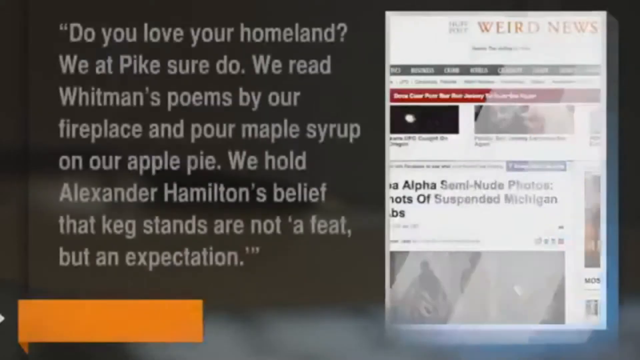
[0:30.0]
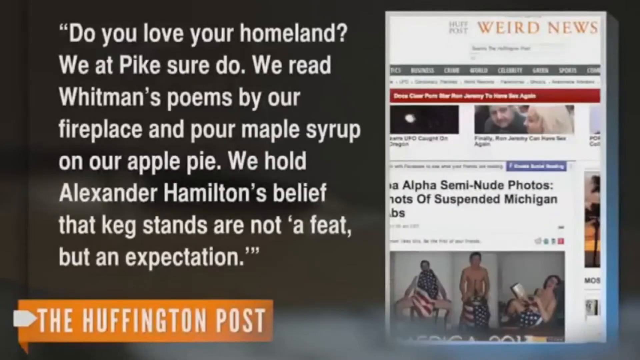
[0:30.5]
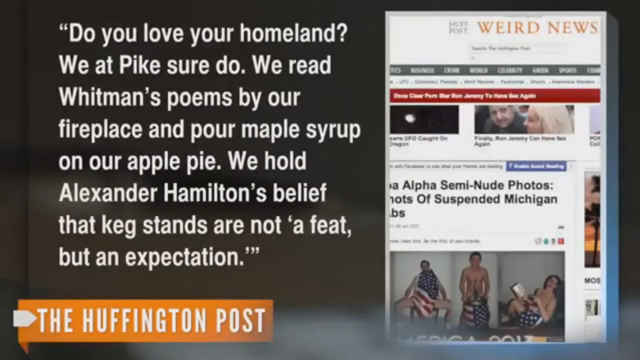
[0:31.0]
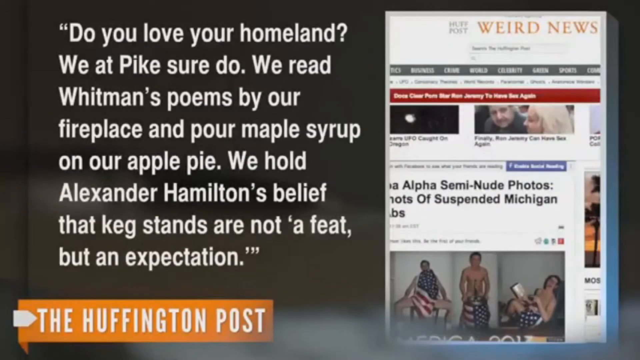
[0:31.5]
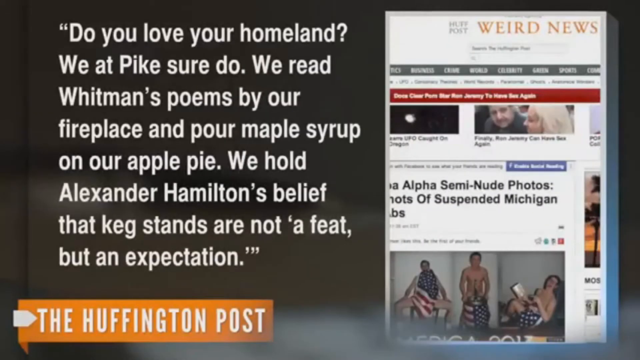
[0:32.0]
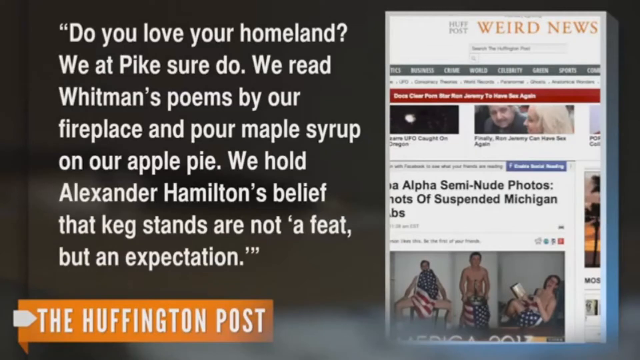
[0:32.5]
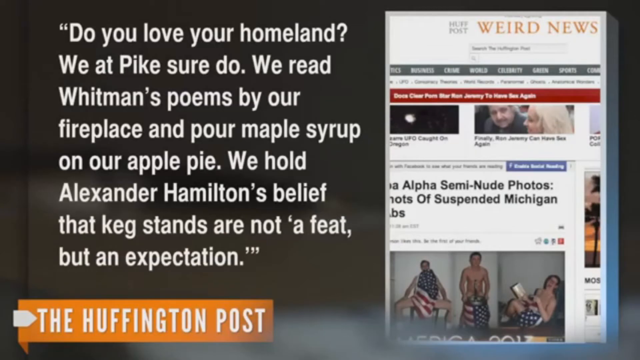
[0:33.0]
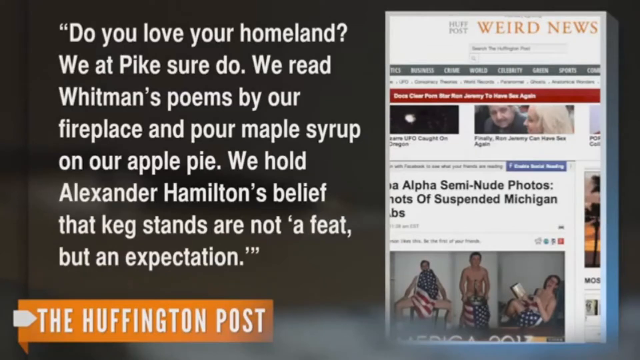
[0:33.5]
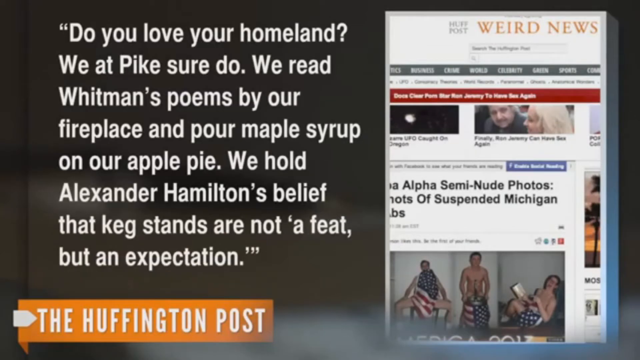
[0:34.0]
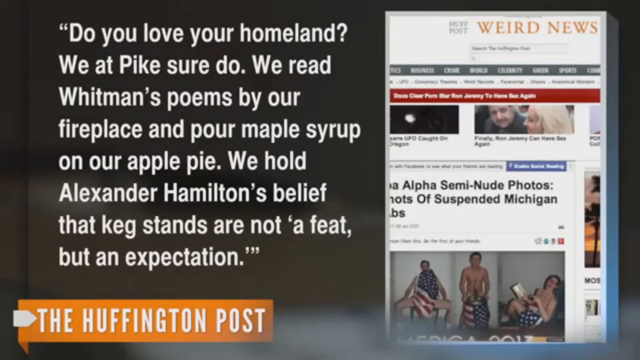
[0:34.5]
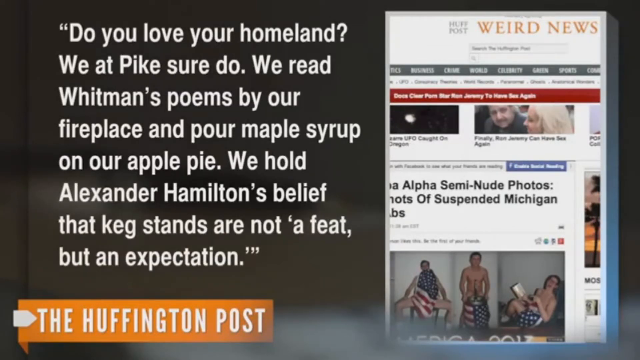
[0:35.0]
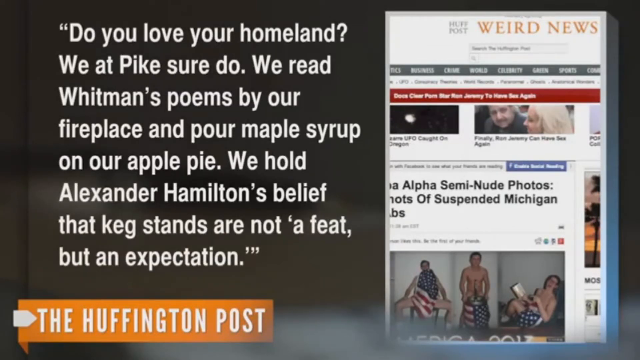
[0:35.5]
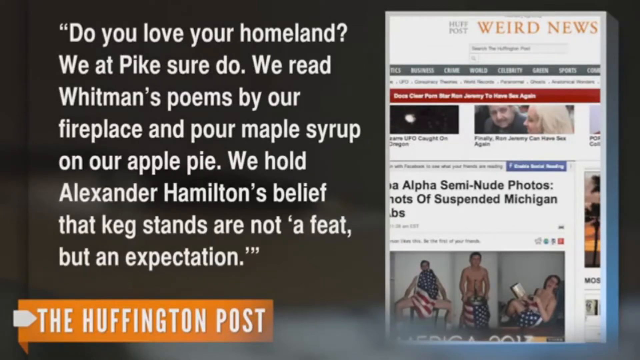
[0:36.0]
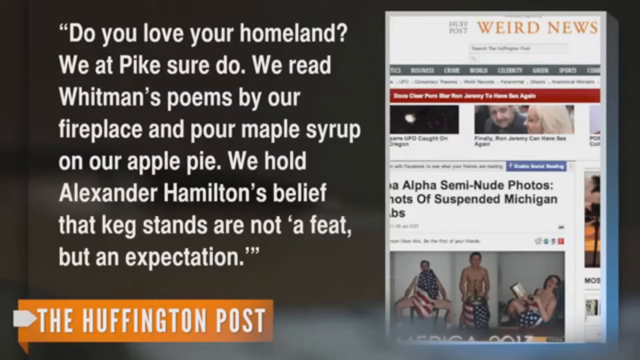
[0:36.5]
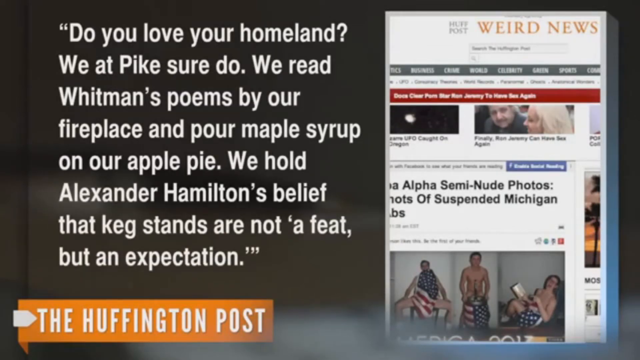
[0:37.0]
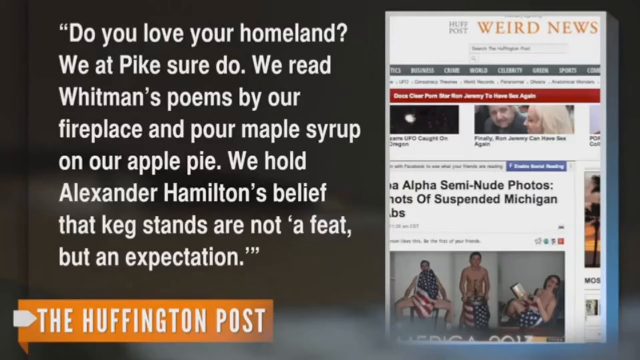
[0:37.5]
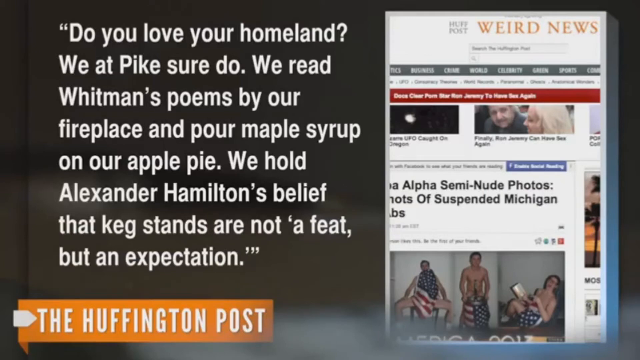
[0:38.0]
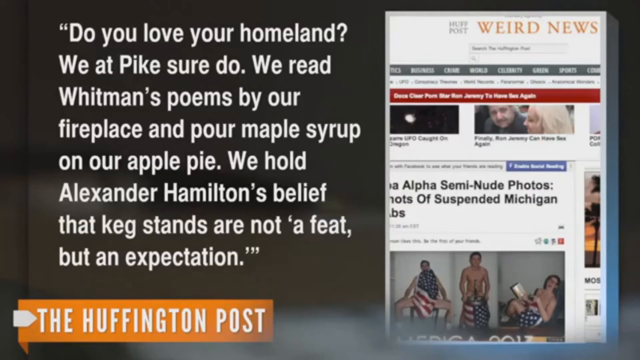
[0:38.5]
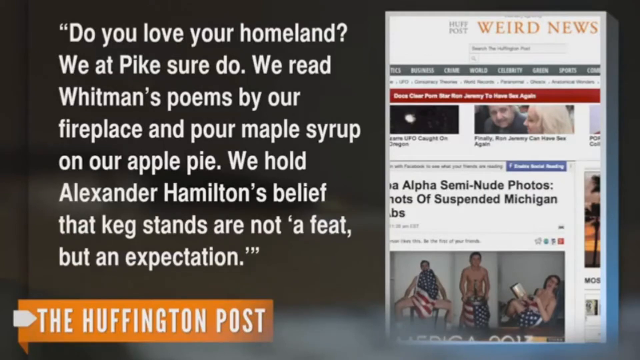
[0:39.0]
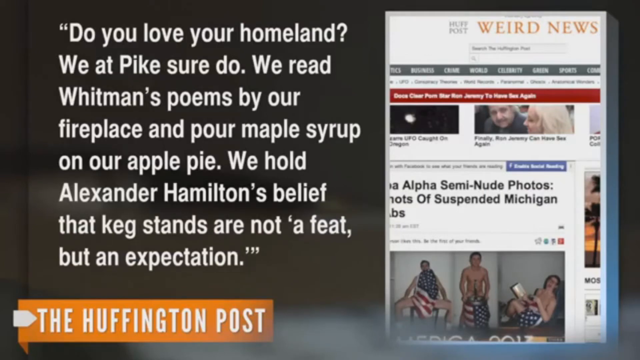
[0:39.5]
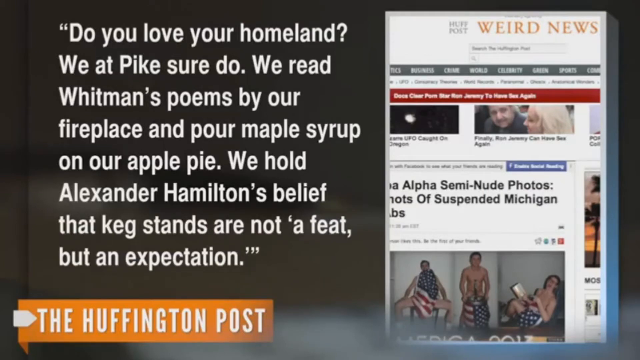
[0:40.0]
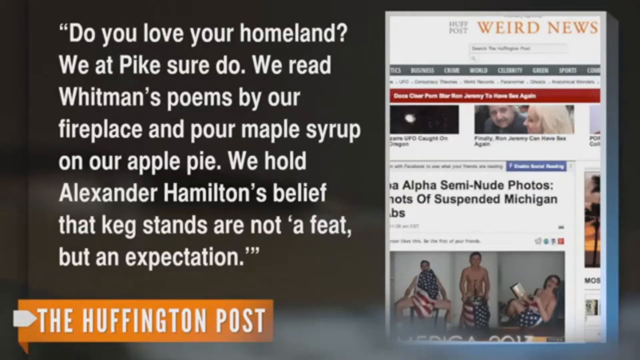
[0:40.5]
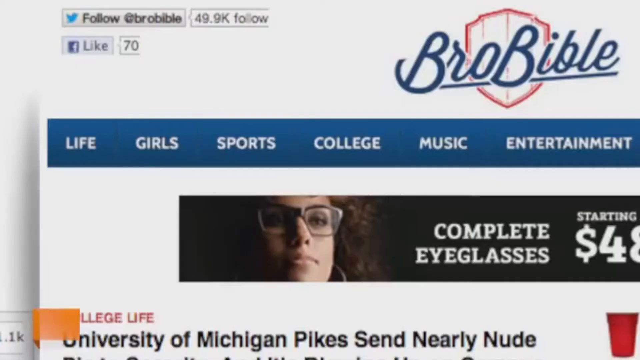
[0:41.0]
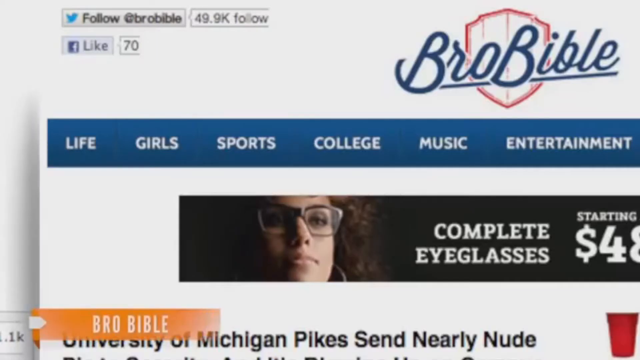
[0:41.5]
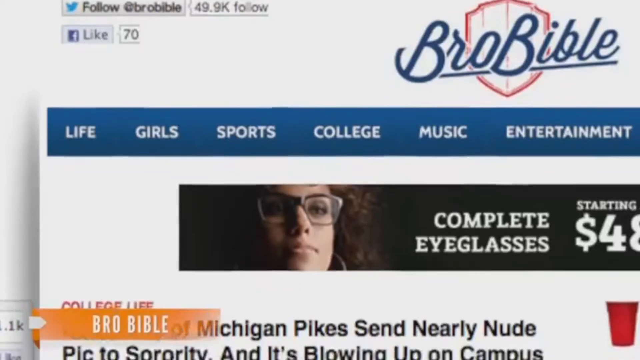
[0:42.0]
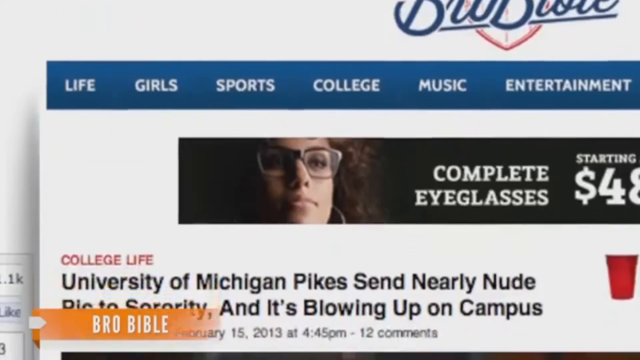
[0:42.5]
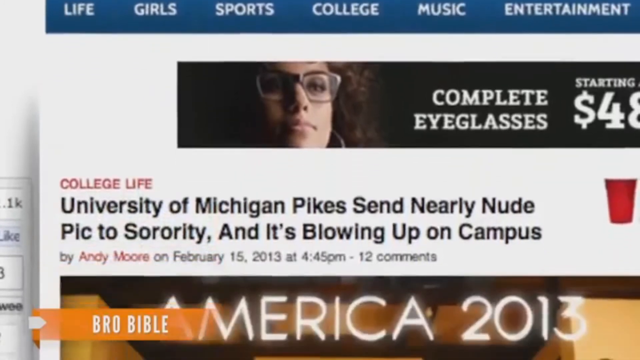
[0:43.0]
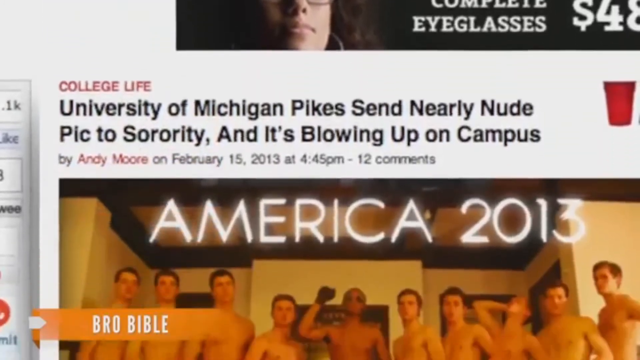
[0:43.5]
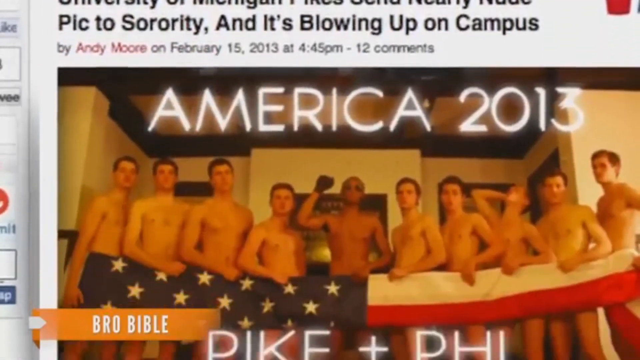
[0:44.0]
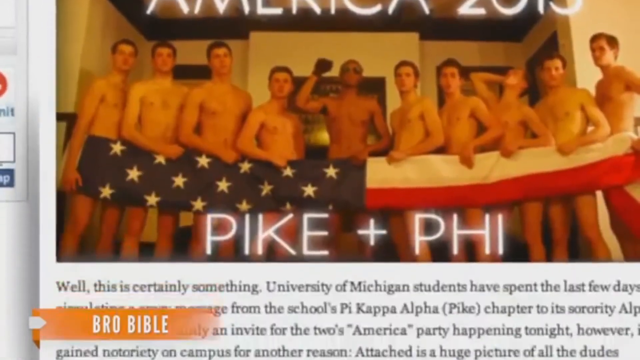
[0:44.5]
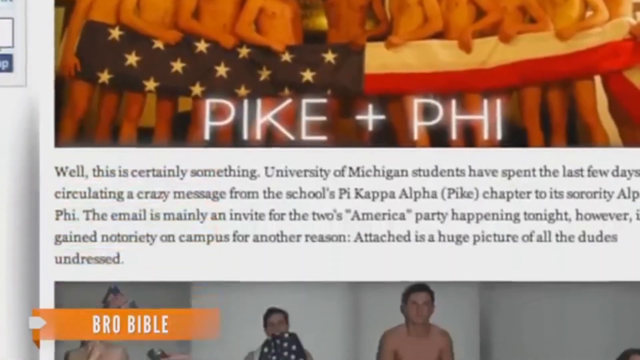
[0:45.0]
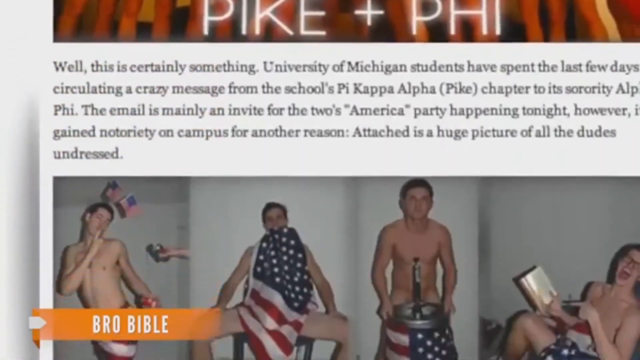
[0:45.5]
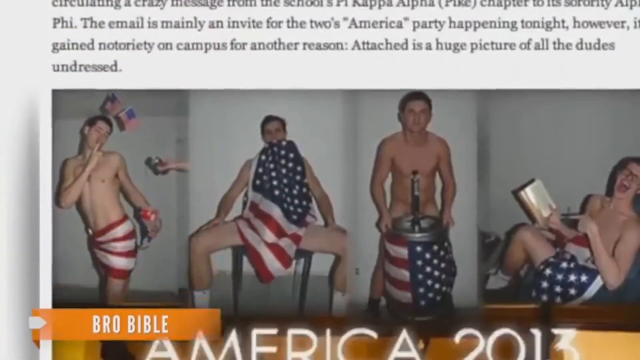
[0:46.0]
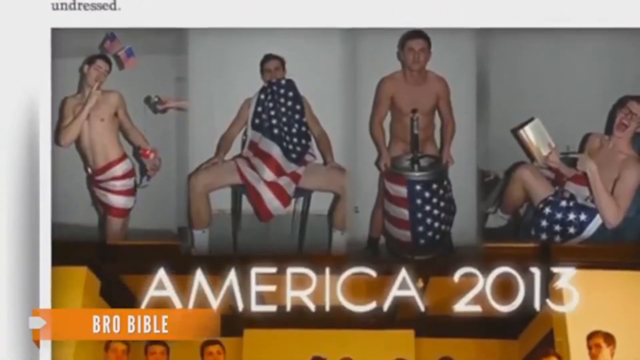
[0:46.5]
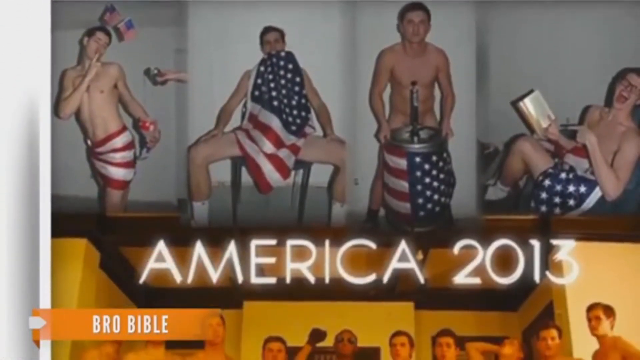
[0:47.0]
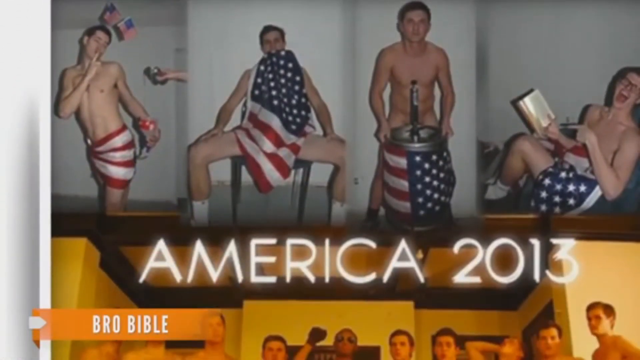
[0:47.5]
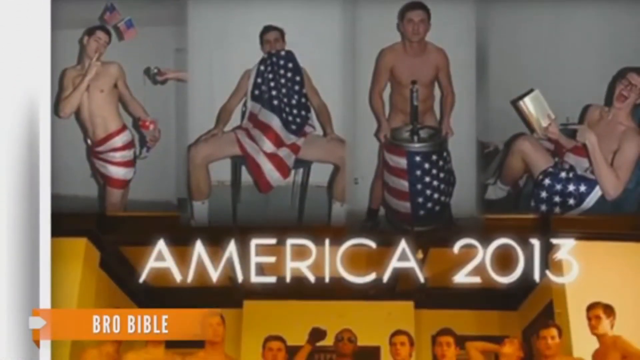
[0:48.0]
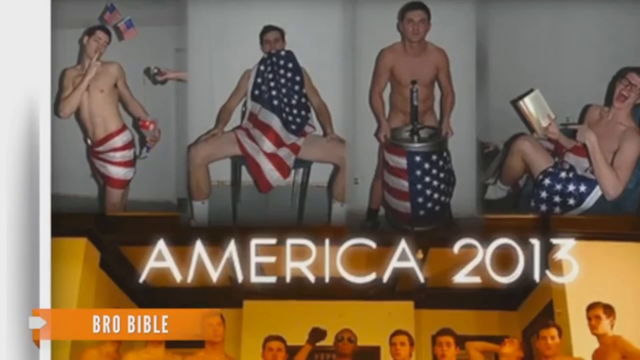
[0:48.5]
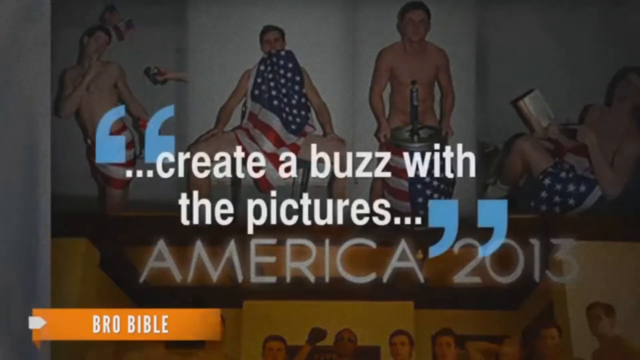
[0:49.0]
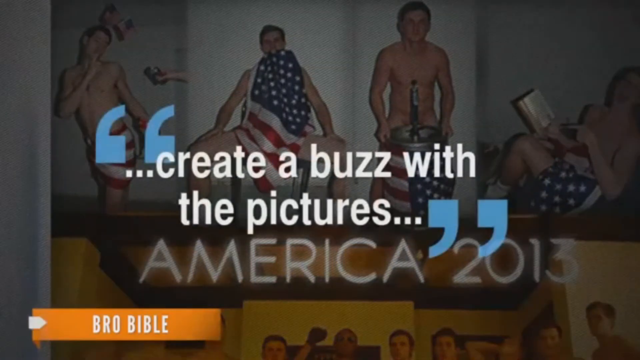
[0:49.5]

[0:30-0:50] On the left side of the screen, white text reads "Do you love your homeland? We at Pike sure do. We read Whitman's poems by our fireplace and pour maple syrup on our apple pie. We hold Alexander Hamilton's belief that keg stands are not 'a feat, but an expectation'", credited to Huffington Post, while the right side of the screen shows an image of an article. The video cuts to a website called BroBible with a list of topics such as life, girls, sports, college, music, and entertainment across the top. There is an ad for eyeglasses, and the page scrolls down to an article titled "University of Michigan Pikes send nearly nude pic to sorority, and it's blowing up on campus". It scrolls through the article, showing a number of the images that were sent, before a quote appears in white text: "...create a buzz with the pictures...".